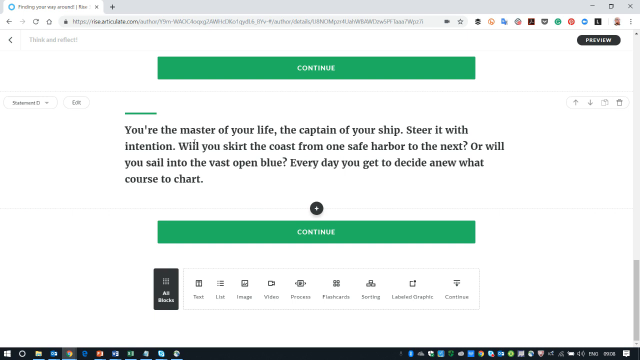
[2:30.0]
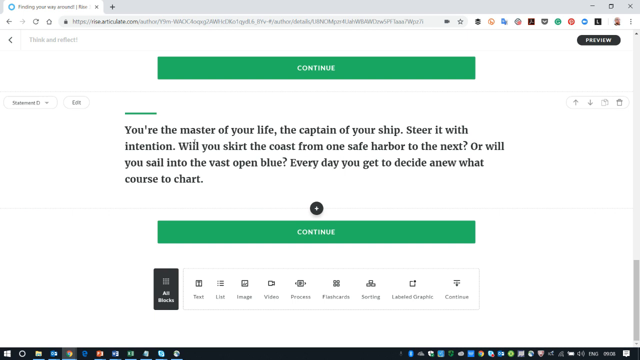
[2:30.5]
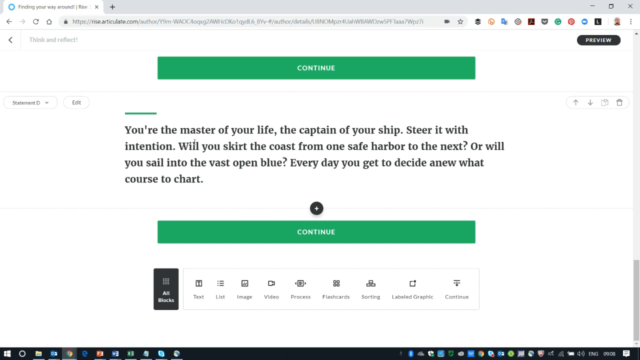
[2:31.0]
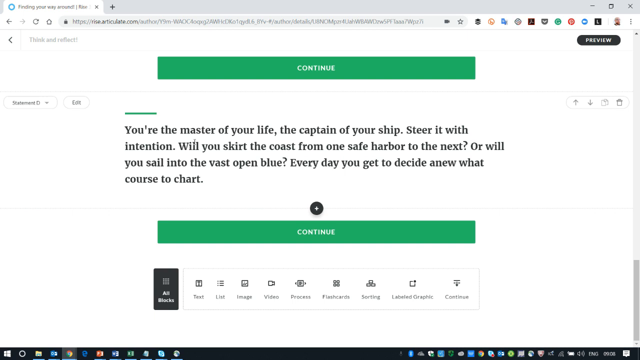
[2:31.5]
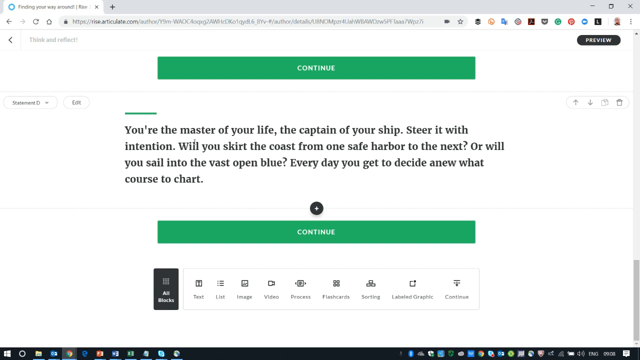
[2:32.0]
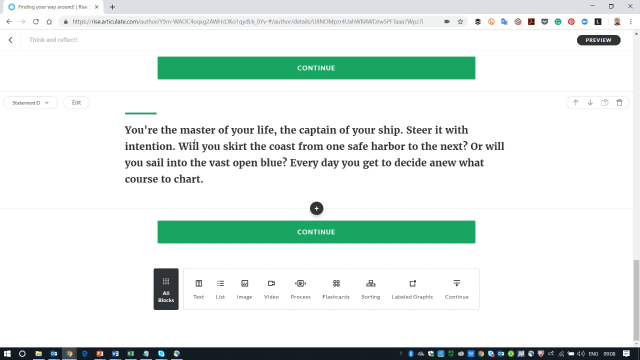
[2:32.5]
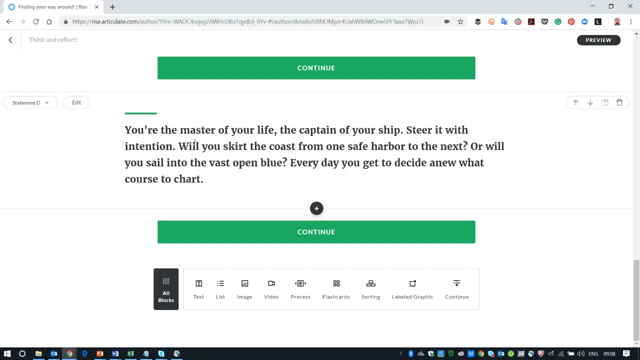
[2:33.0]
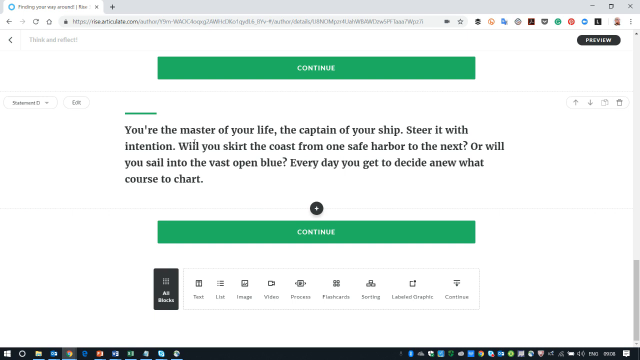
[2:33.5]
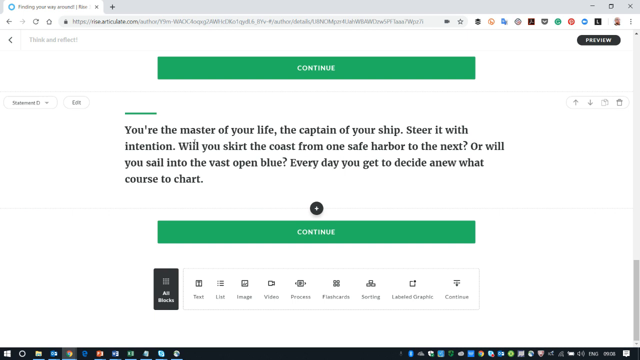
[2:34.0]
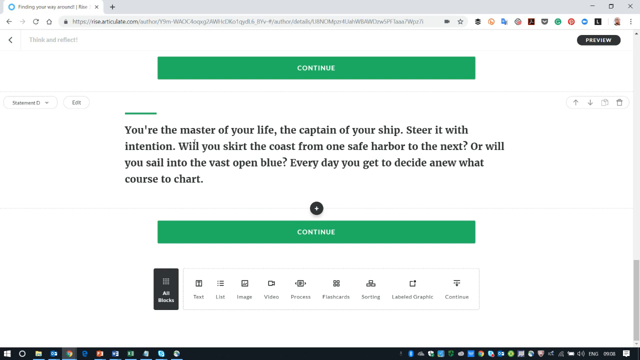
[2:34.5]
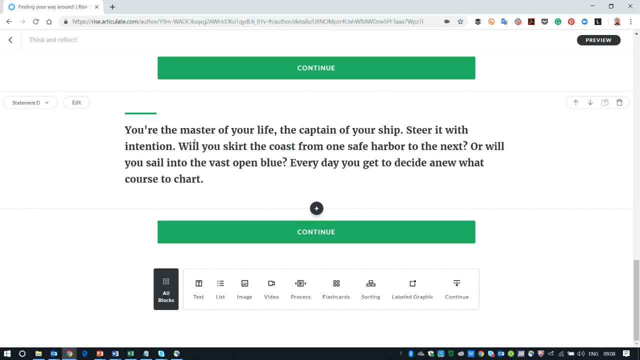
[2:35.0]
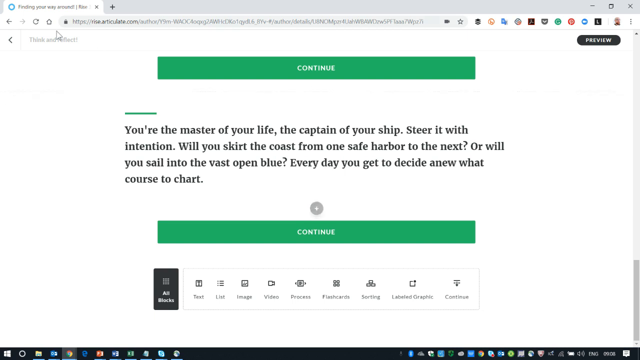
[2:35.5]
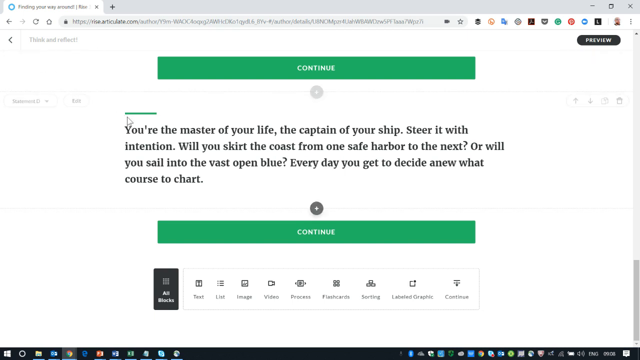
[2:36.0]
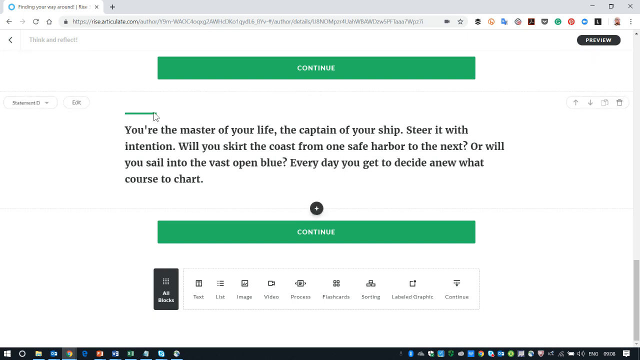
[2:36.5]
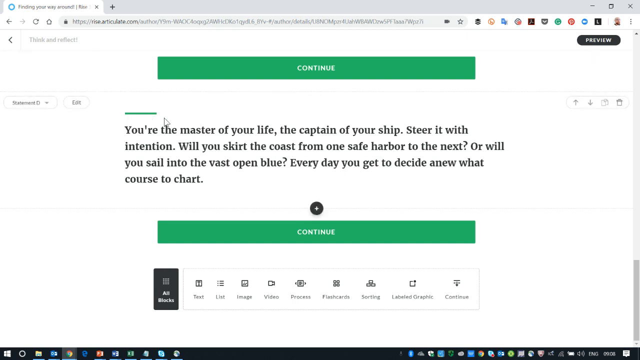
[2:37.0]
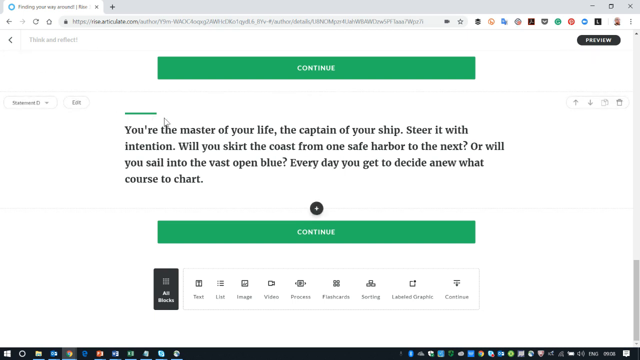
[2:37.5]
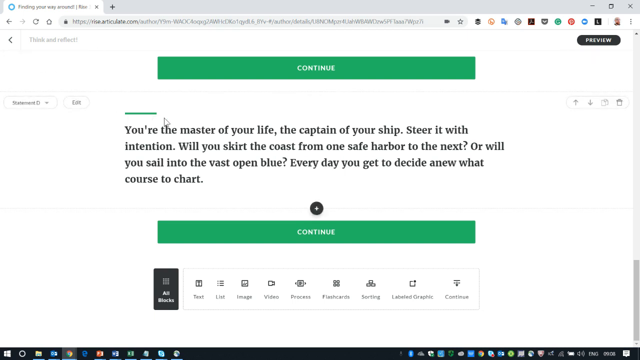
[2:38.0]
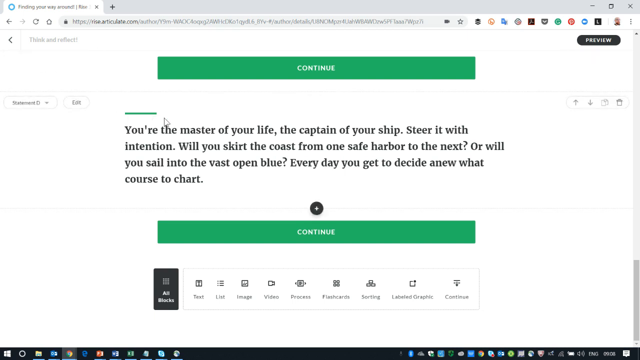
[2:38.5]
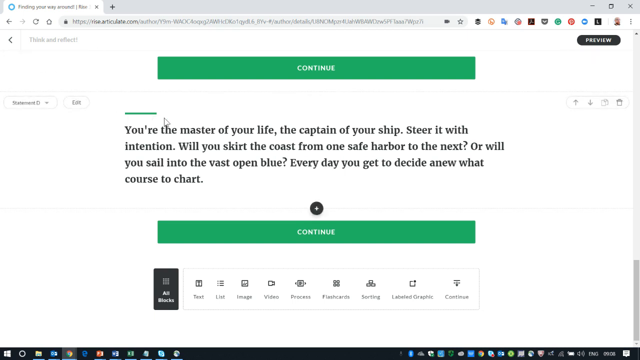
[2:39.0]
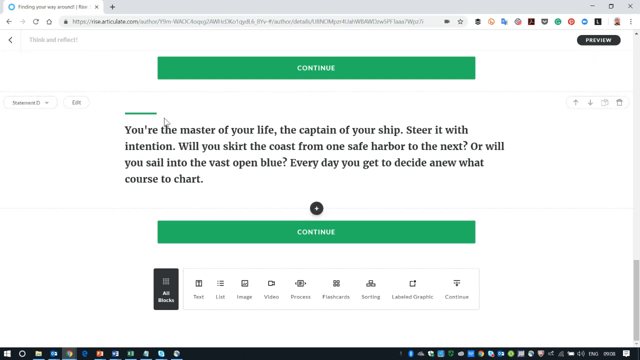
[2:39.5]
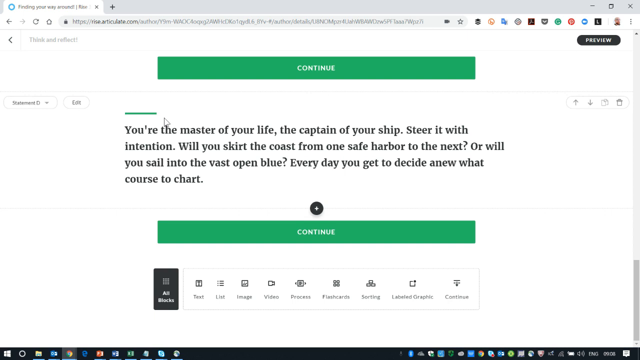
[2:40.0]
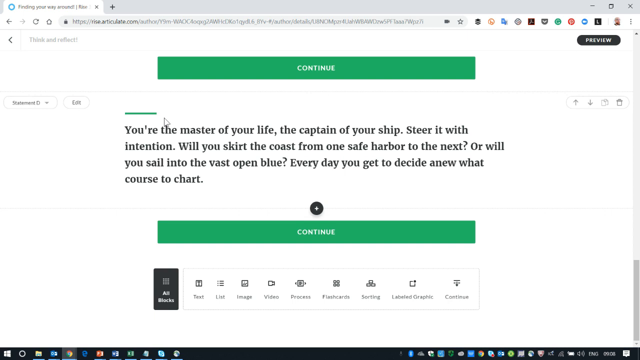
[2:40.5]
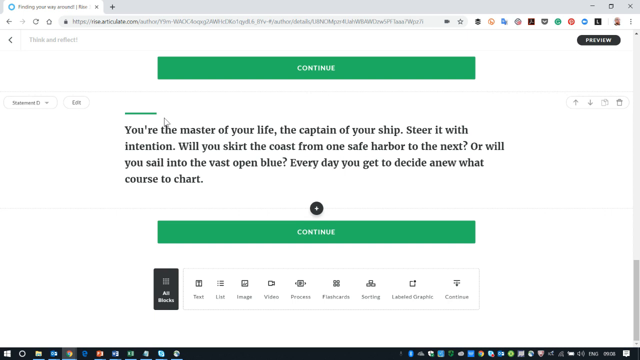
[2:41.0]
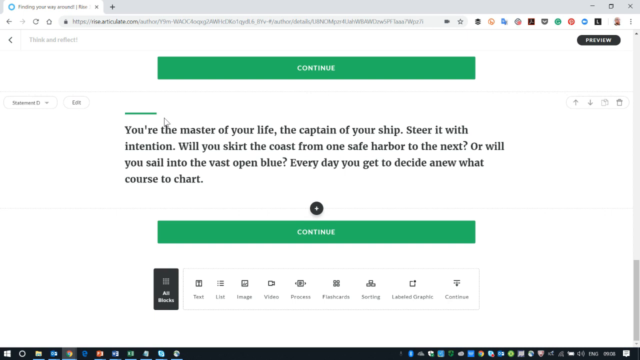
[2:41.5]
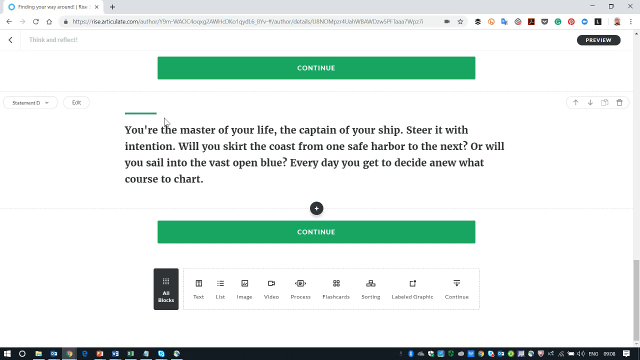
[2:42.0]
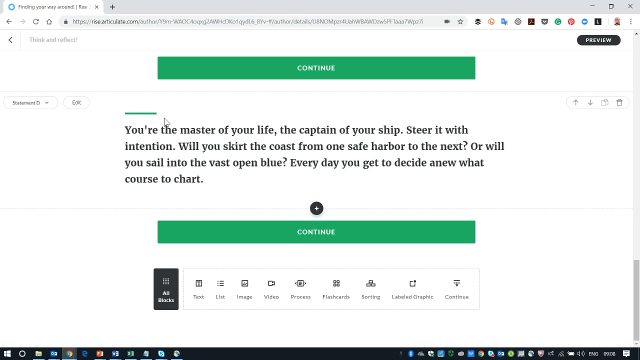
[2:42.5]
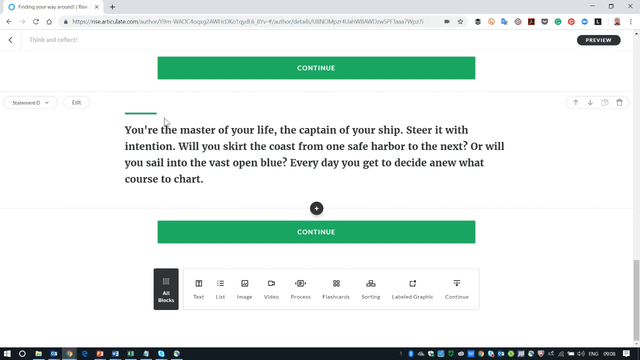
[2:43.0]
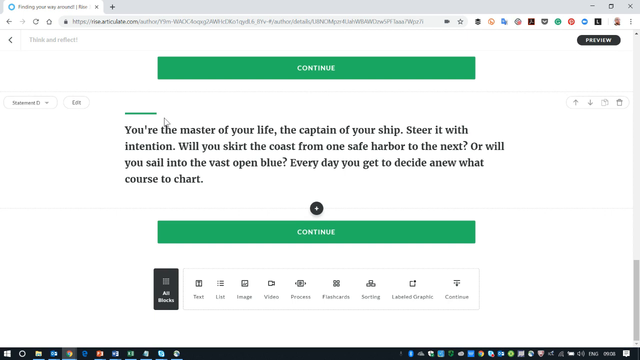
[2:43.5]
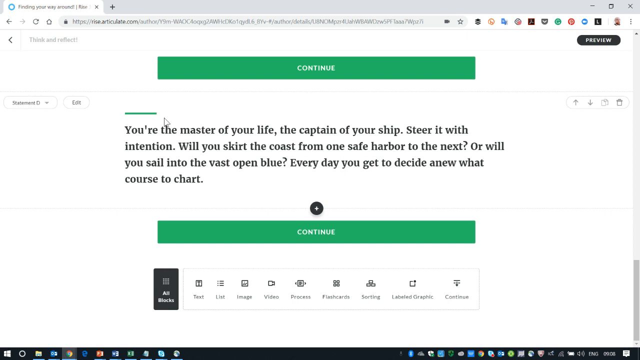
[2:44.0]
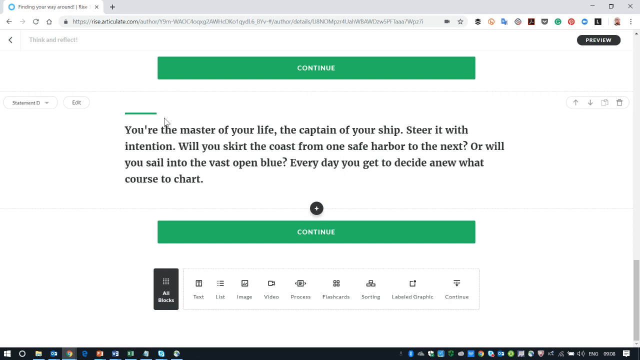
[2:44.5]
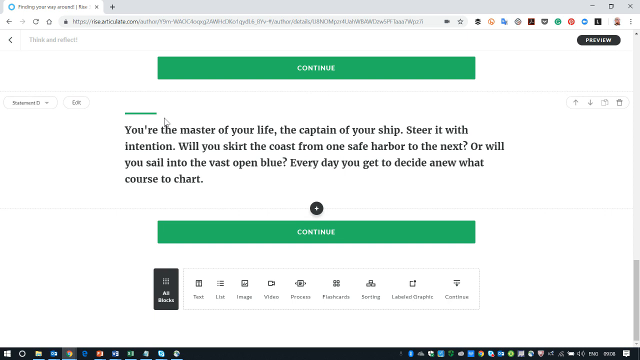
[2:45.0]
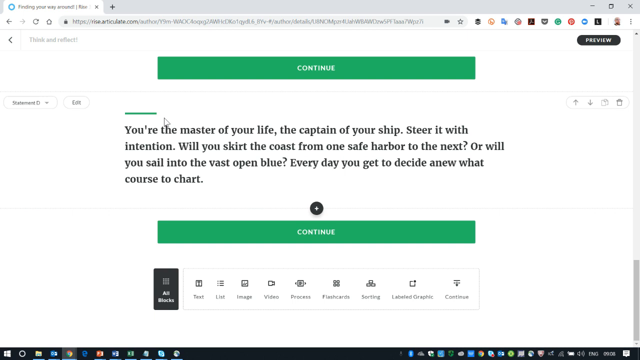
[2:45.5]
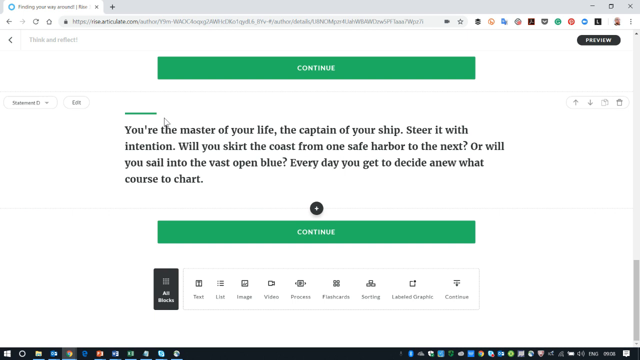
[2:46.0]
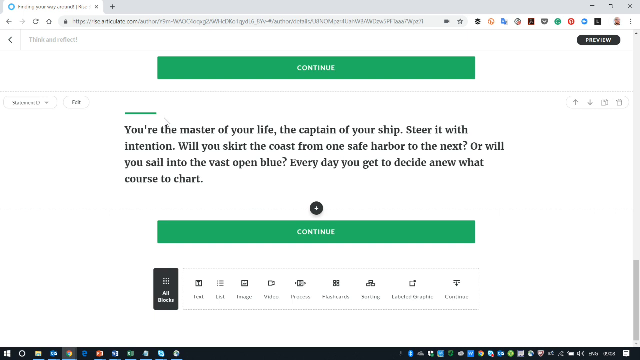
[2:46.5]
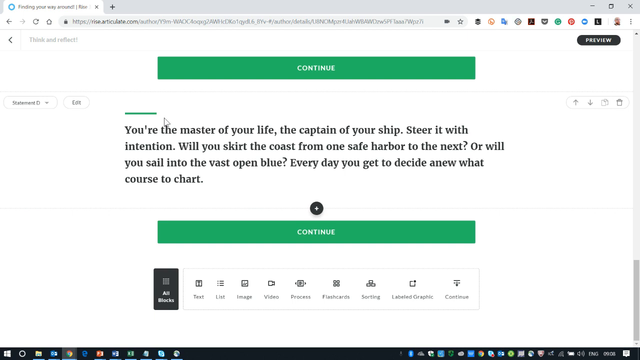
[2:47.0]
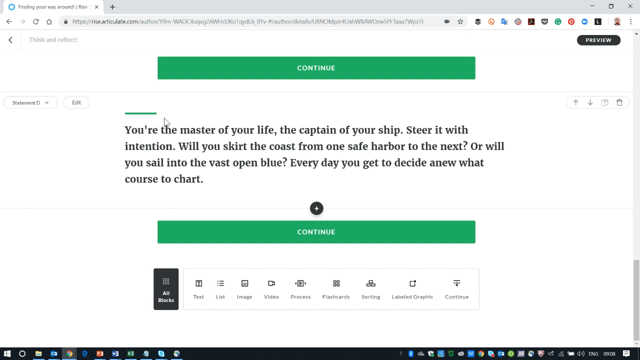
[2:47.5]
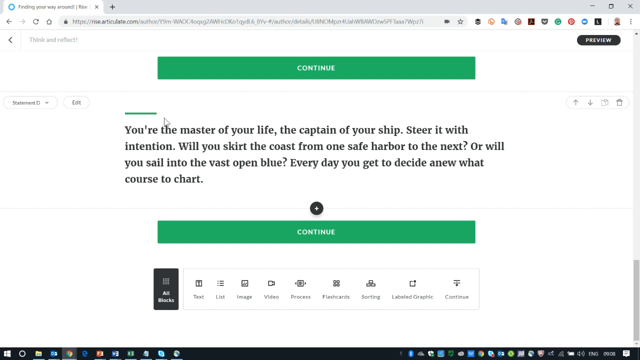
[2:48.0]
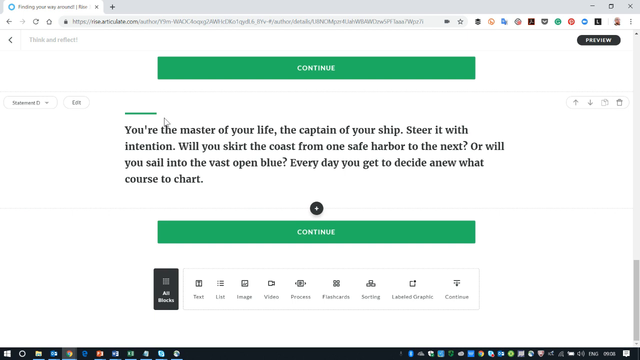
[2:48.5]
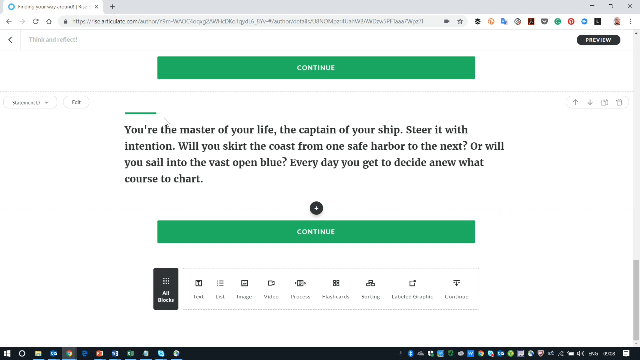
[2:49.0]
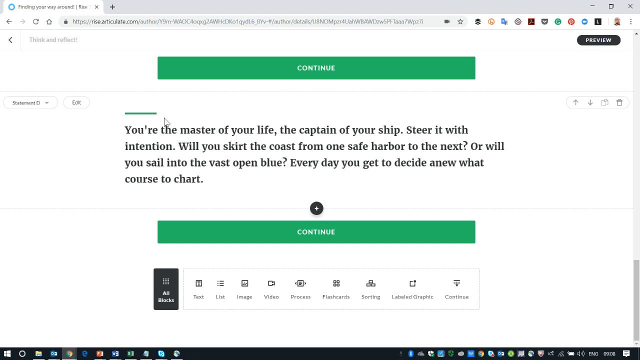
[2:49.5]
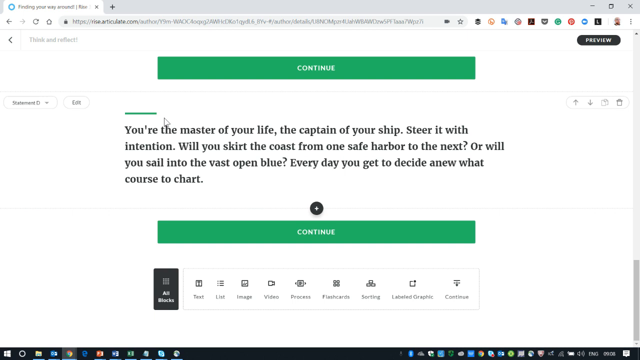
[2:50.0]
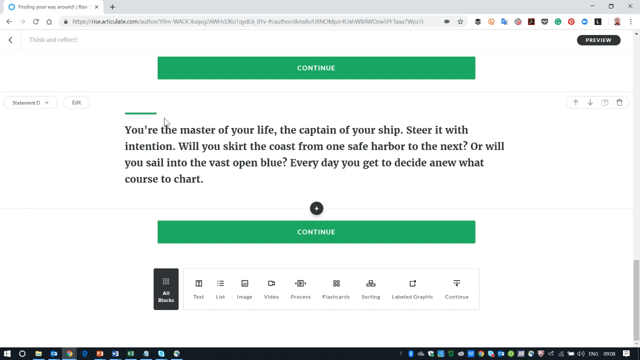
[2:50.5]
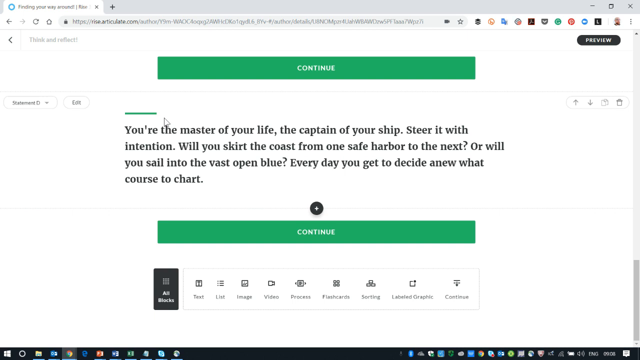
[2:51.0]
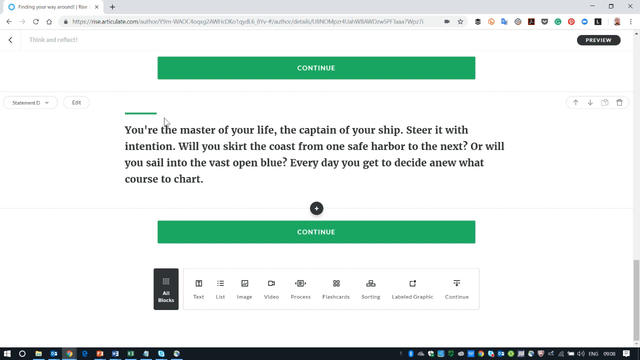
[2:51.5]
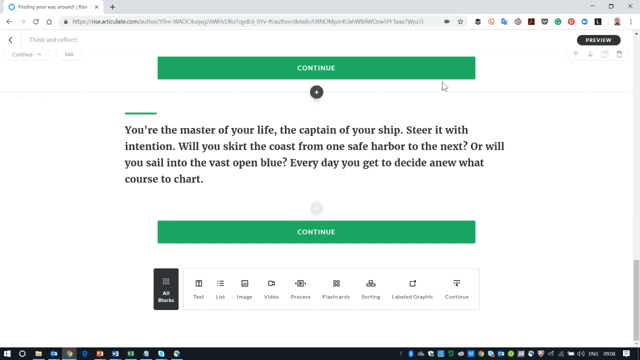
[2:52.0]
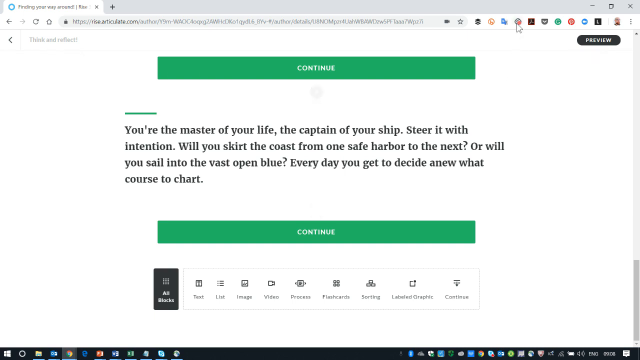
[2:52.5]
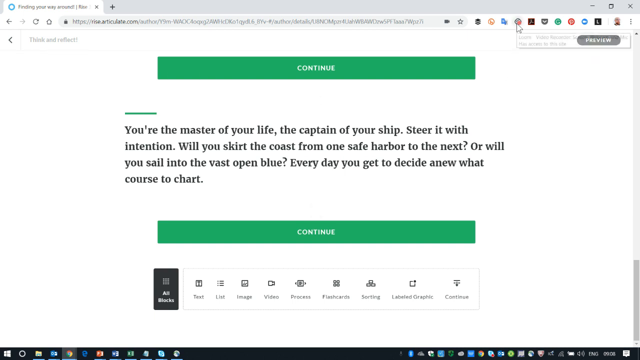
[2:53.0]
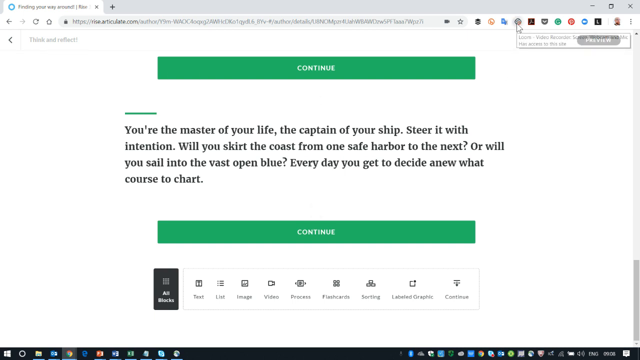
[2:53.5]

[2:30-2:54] The question remains: "You are the master of your life, the captain of your ship, steer it with intention. Will you skirt the coast from one safe harbor to the next? Or will you sail to the vast open blue? Every day, you get to decide anew what course to chart." The view is still in preview mode, and the photo has been turned into a video. After editing, clicking preview returns to the original page. The preview mode offers many options: label graphics, continue, sort, process, make it a video, make it an image, add a text, and make it live.